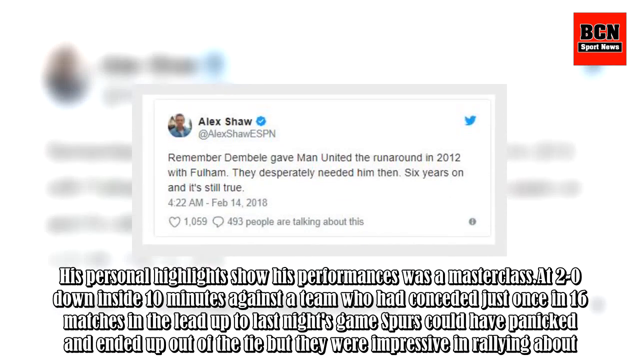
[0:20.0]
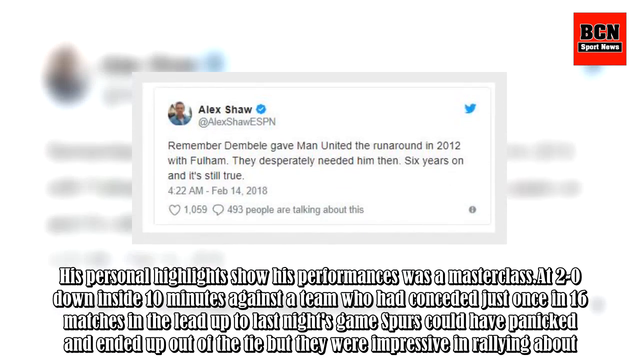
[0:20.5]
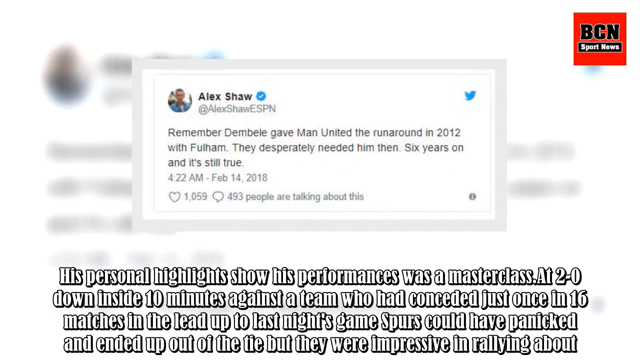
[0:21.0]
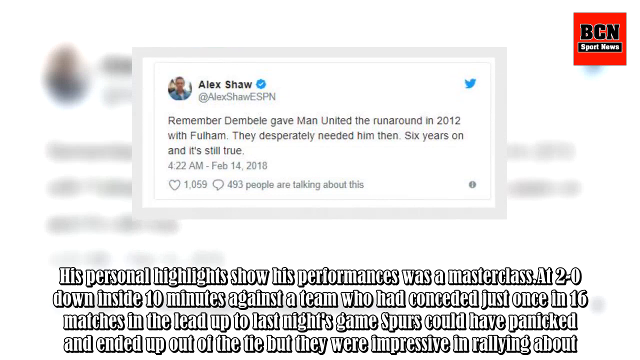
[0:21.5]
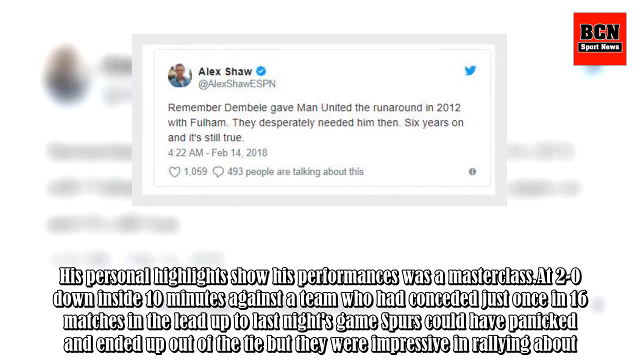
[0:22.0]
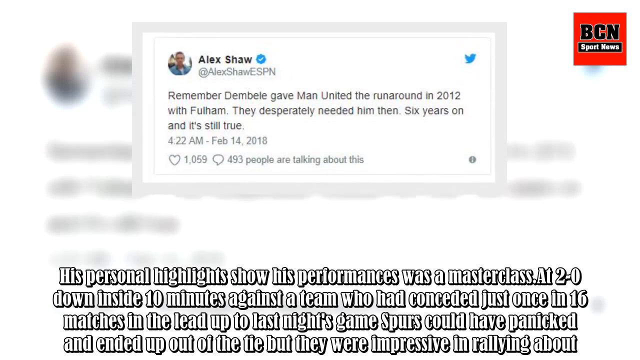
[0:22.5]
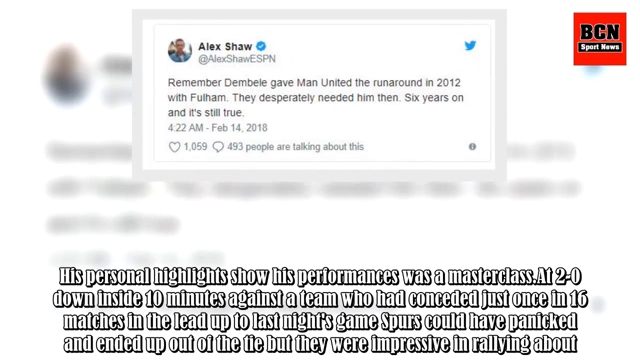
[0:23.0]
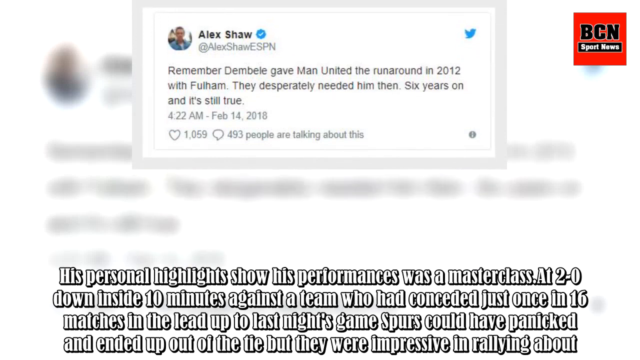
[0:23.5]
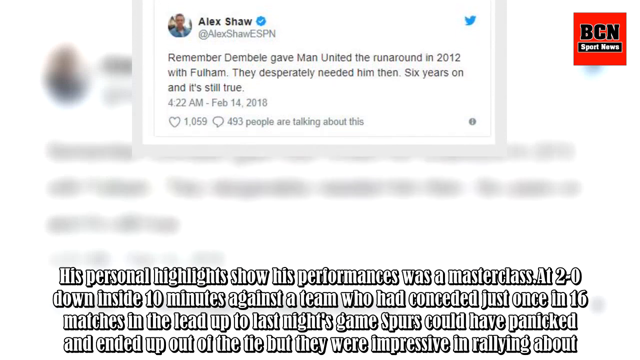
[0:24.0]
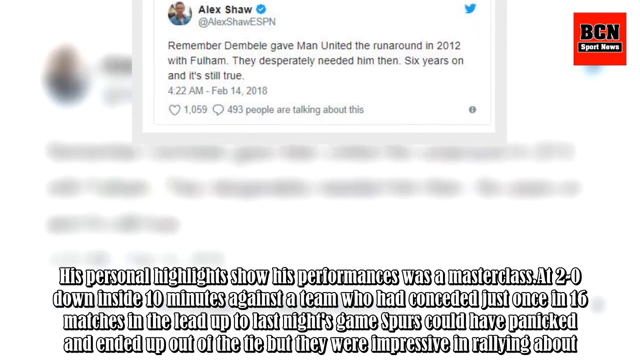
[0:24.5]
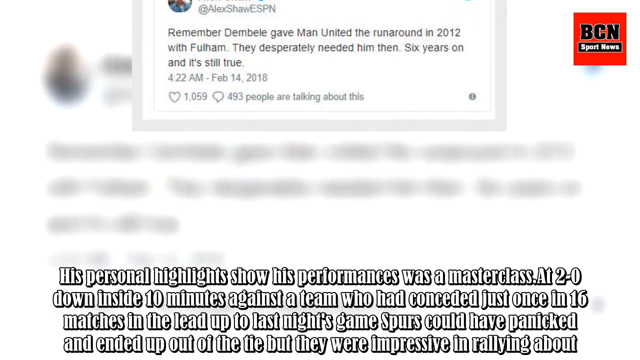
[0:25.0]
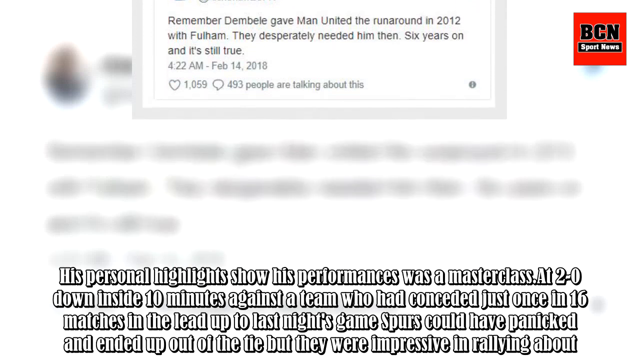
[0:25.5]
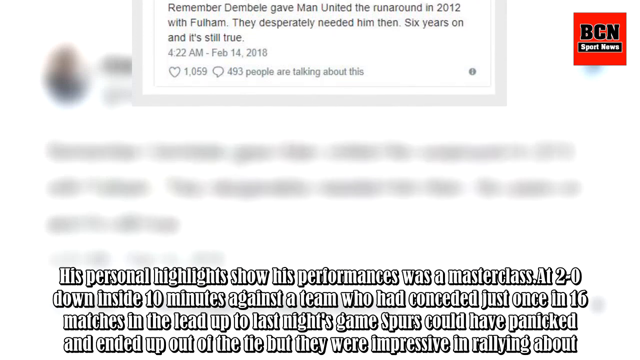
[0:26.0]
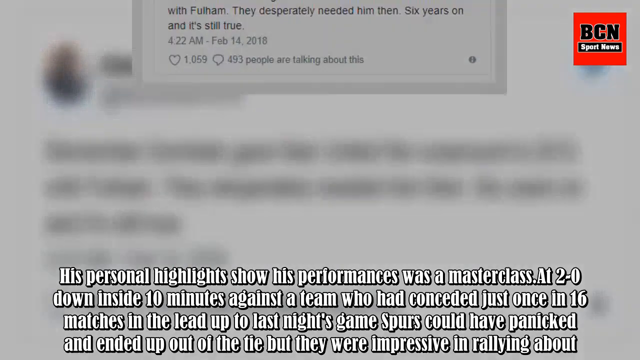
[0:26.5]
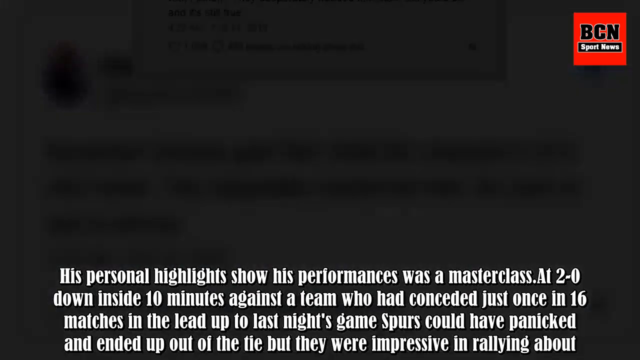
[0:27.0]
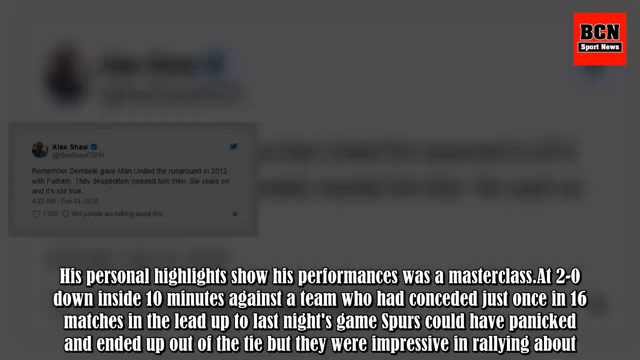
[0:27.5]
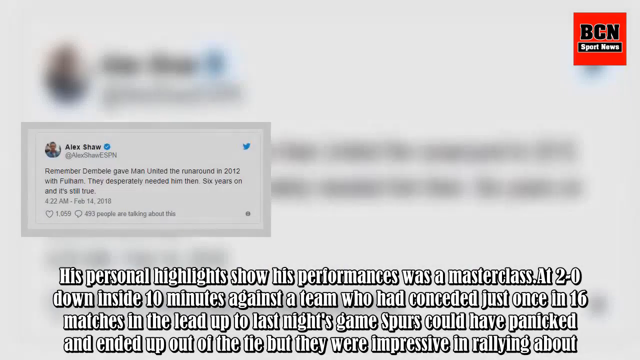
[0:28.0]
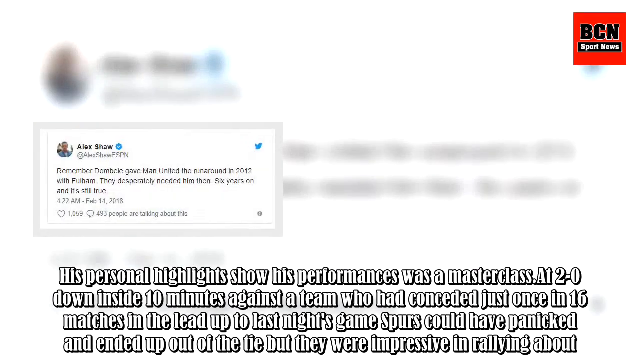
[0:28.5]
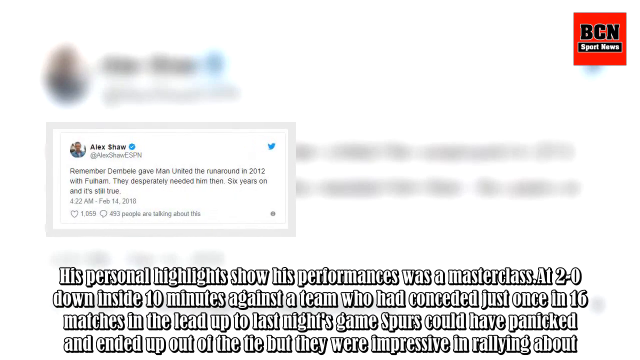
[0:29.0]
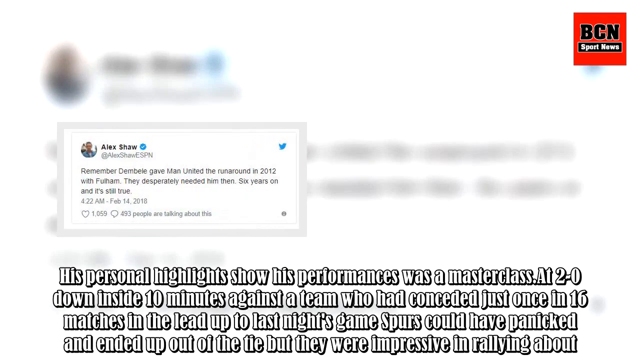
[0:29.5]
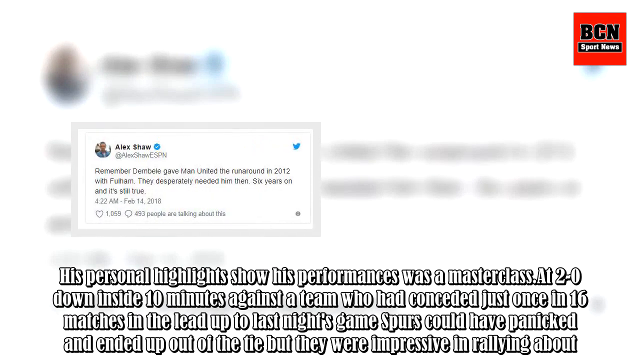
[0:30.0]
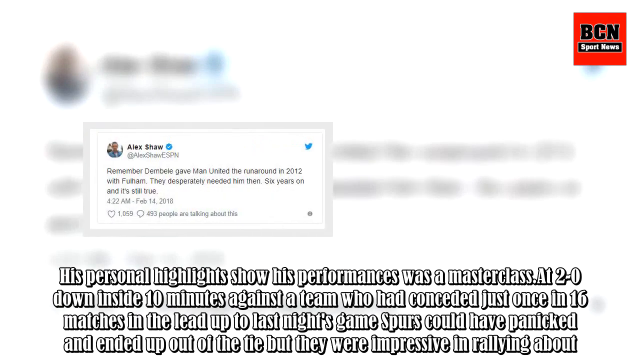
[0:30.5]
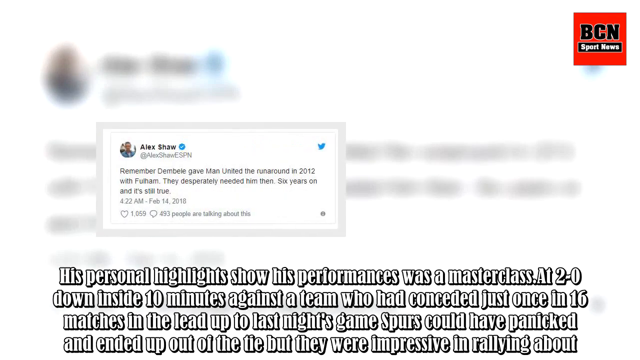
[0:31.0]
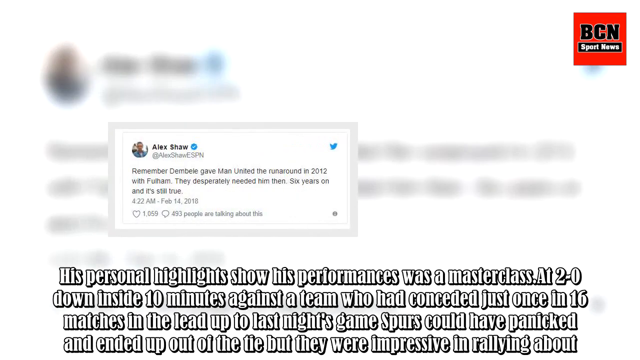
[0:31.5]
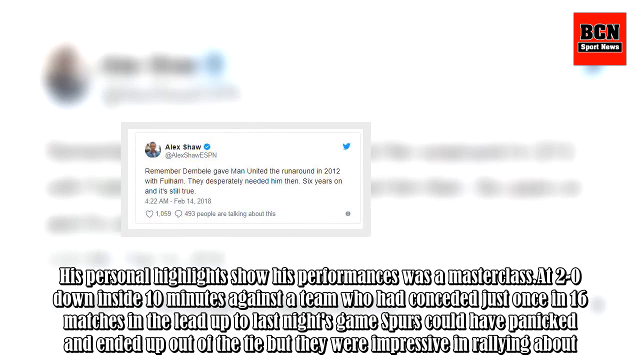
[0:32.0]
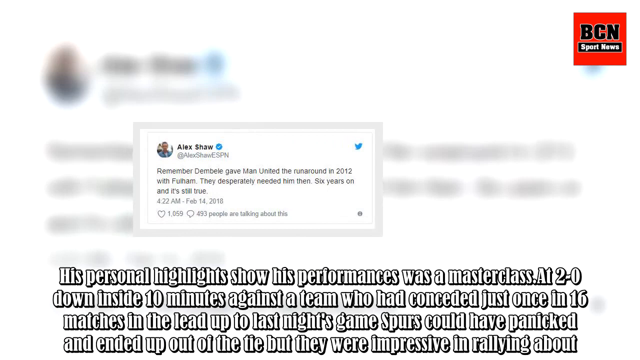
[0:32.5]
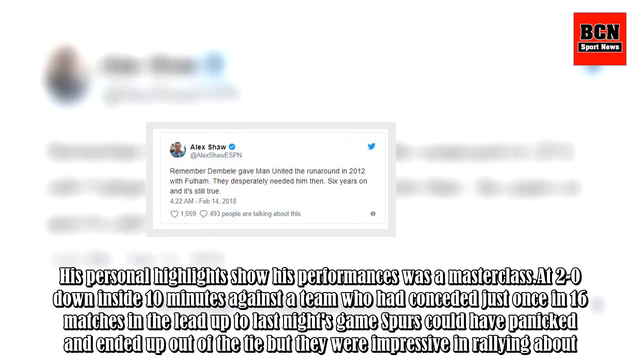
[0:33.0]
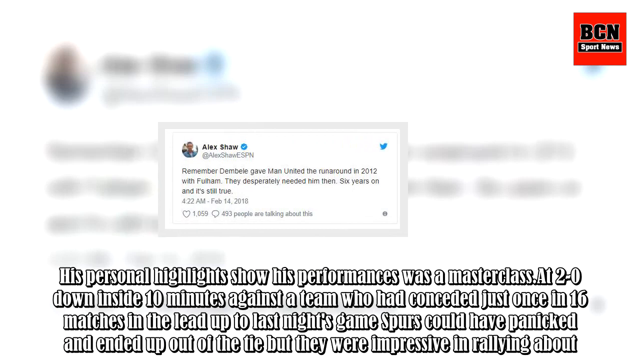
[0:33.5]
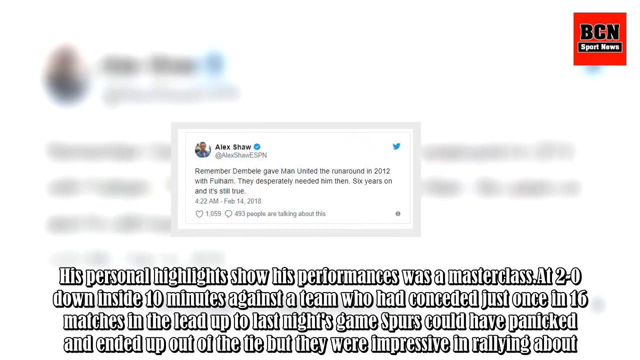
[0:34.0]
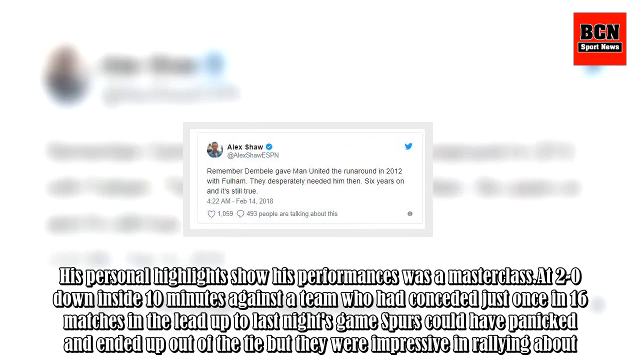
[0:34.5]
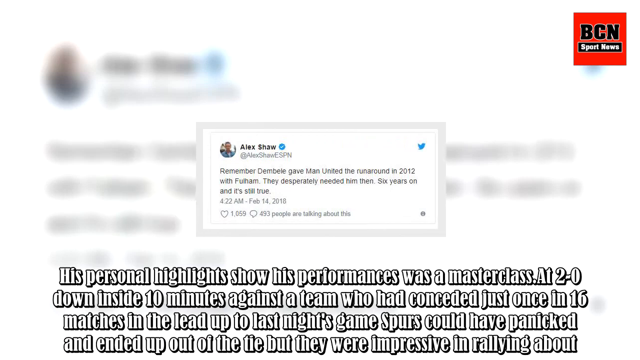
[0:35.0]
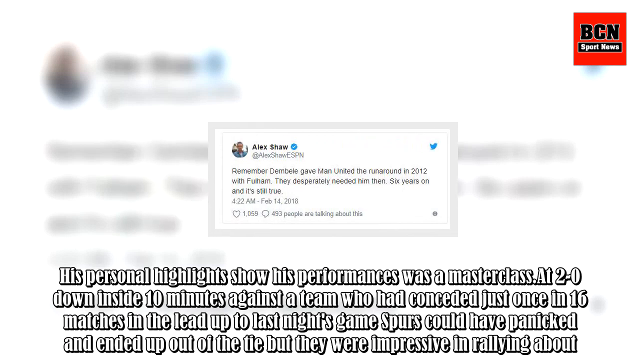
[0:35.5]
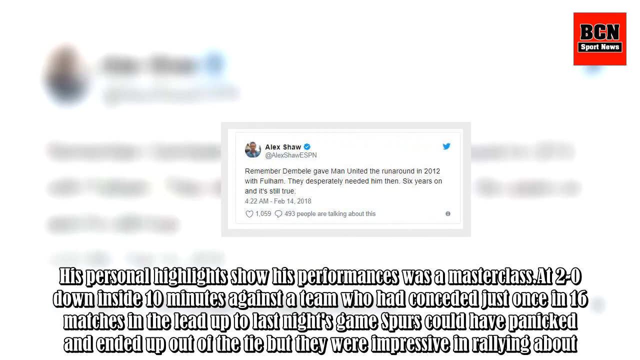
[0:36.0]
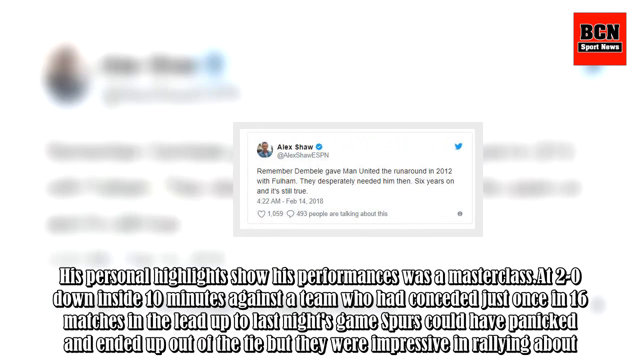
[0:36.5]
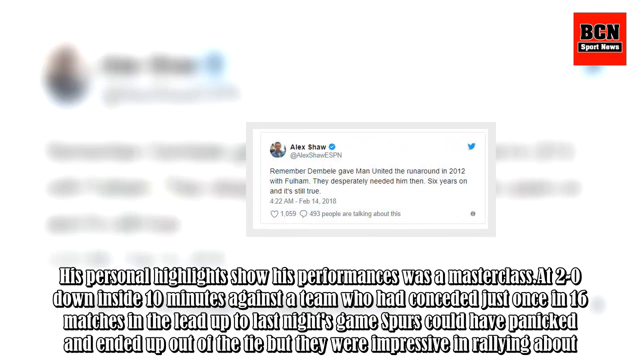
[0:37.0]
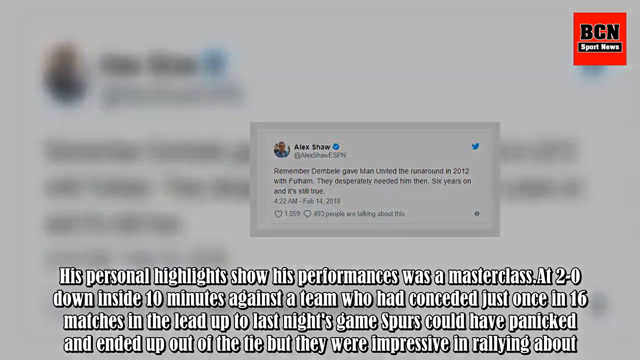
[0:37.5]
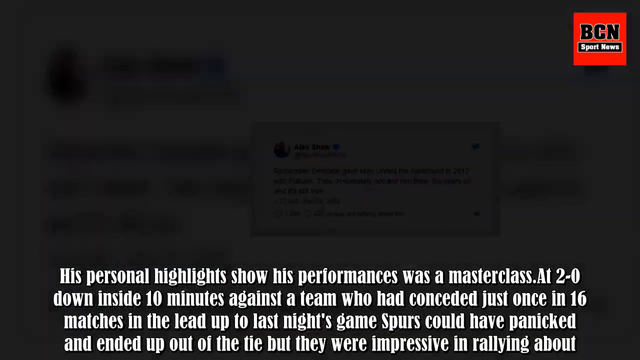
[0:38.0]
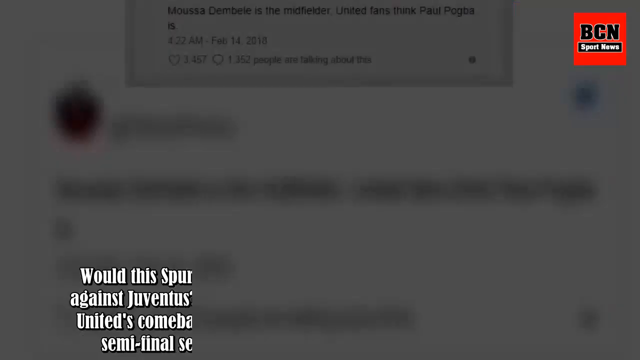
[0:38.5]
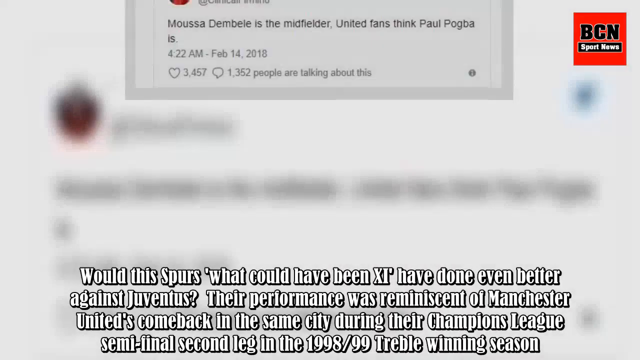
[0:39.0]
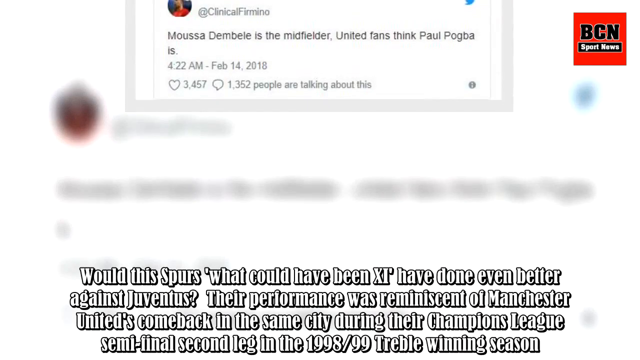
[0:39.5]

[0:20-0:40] Alex Shaw's comment about Dembele, apparently dated Valentine's Day, slides across the screen, showing 493 people talking about this. Text then reads "would this Spurs, what could have been 11, have done even better against Juventus? Their performance was reminiscent of Manchester United's comeback in the same city during their champion league semi-final second leg in the 1998-1999 treble winning season." Another tweet slides into view very quickly, too fast to read.